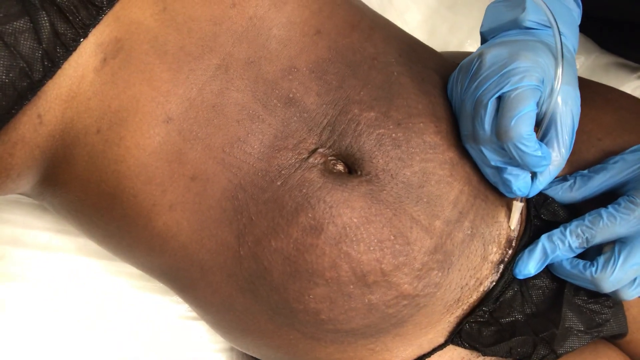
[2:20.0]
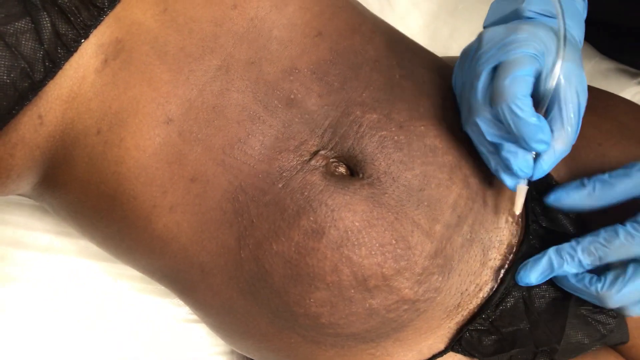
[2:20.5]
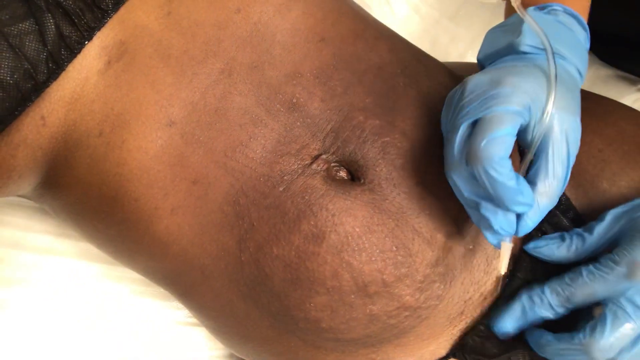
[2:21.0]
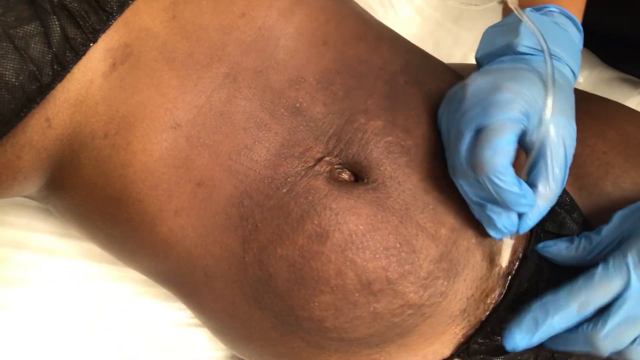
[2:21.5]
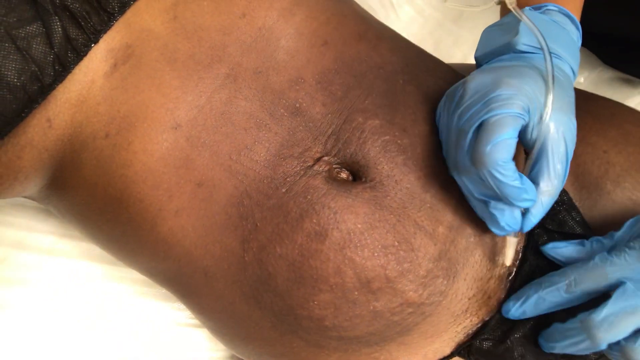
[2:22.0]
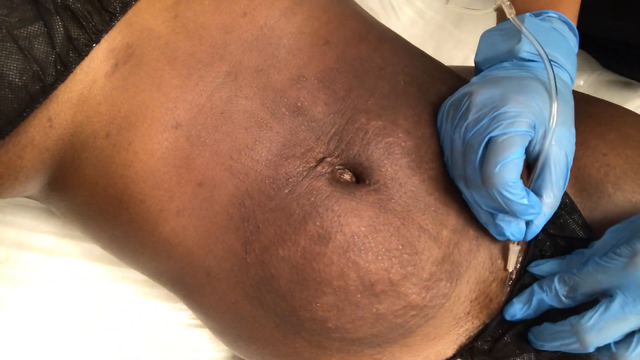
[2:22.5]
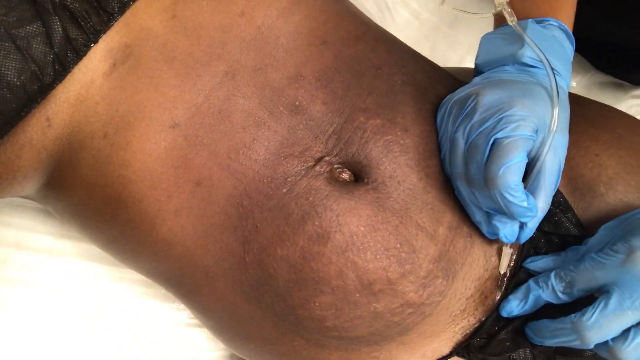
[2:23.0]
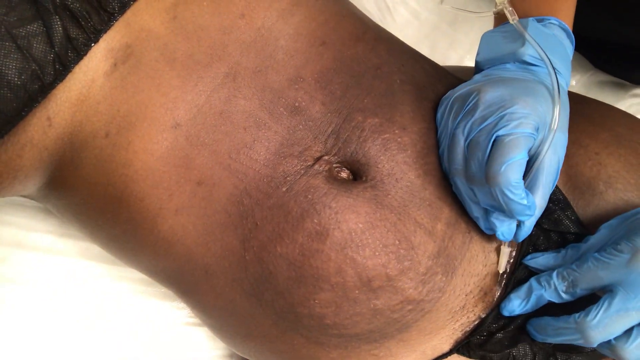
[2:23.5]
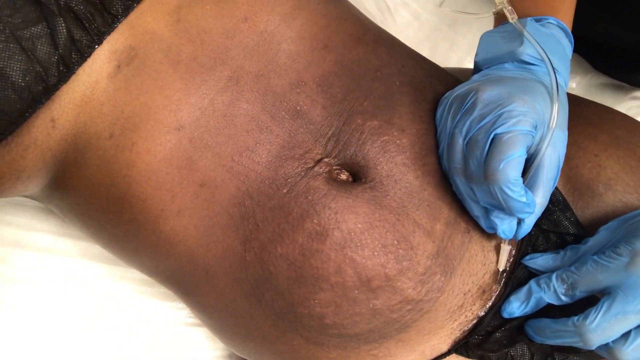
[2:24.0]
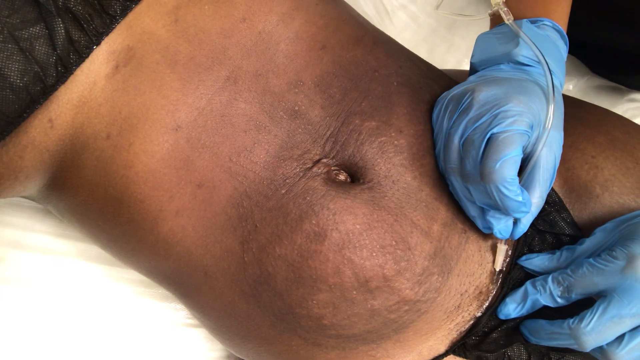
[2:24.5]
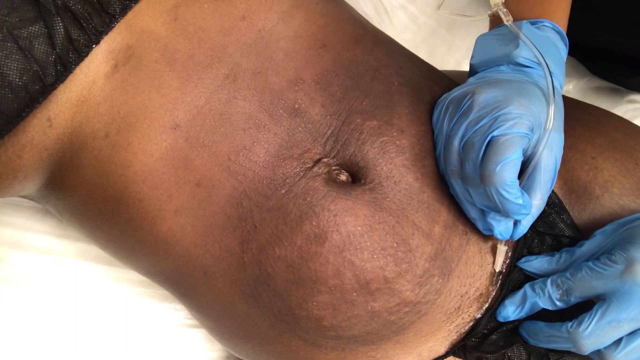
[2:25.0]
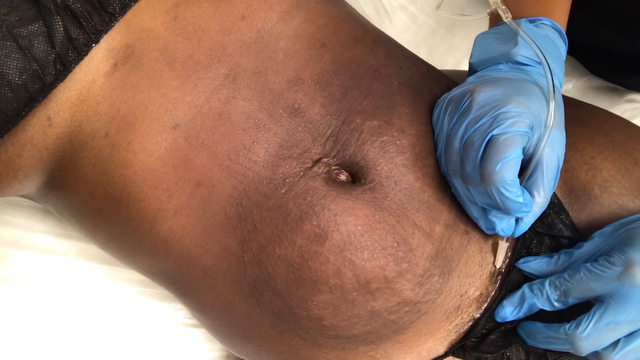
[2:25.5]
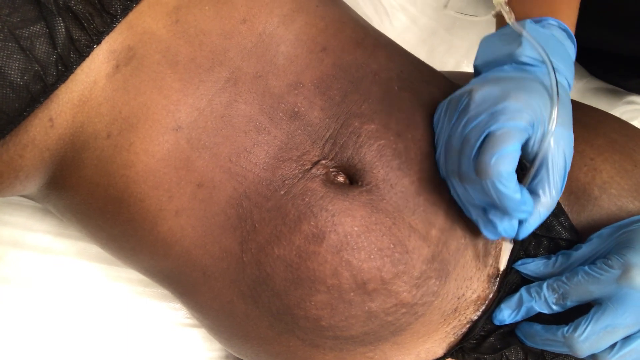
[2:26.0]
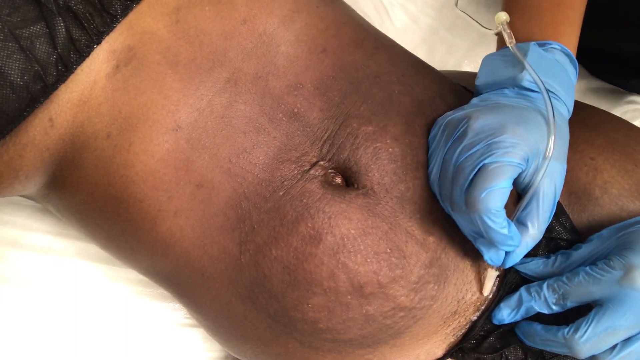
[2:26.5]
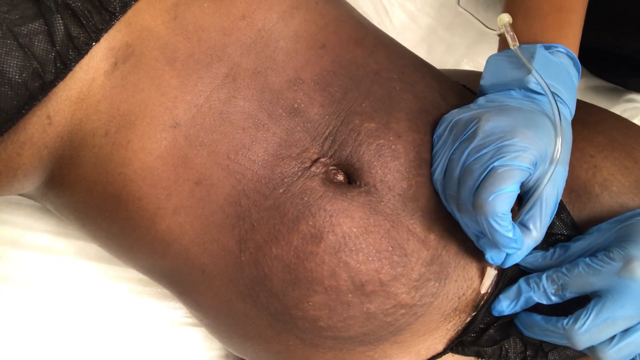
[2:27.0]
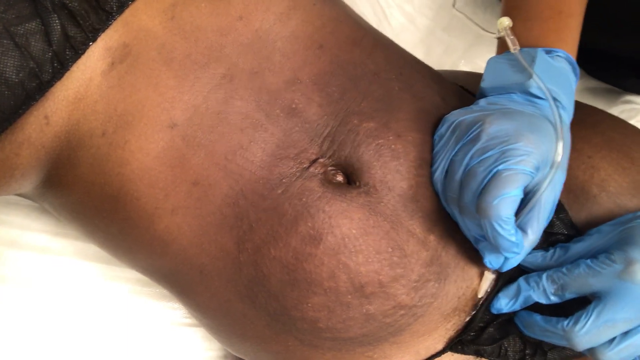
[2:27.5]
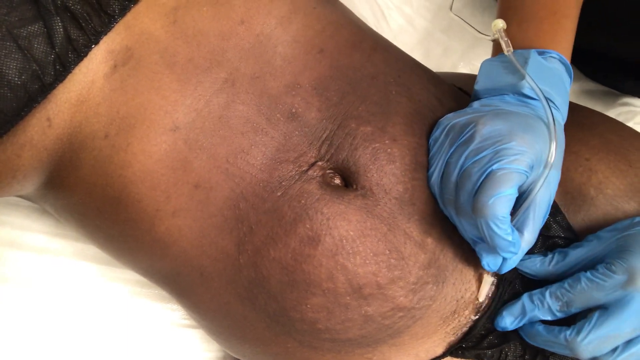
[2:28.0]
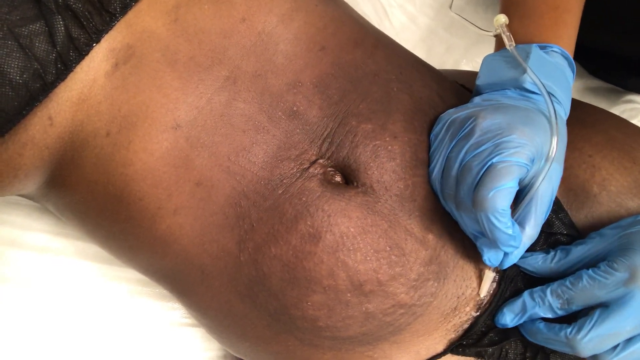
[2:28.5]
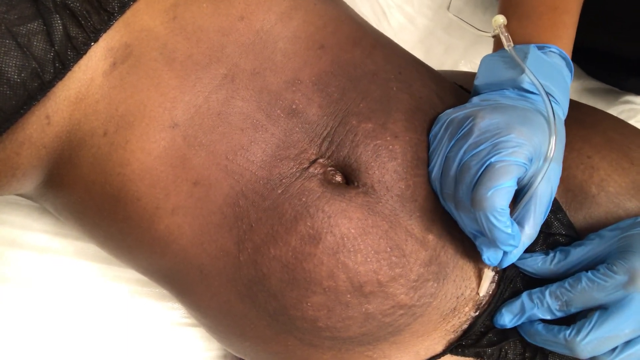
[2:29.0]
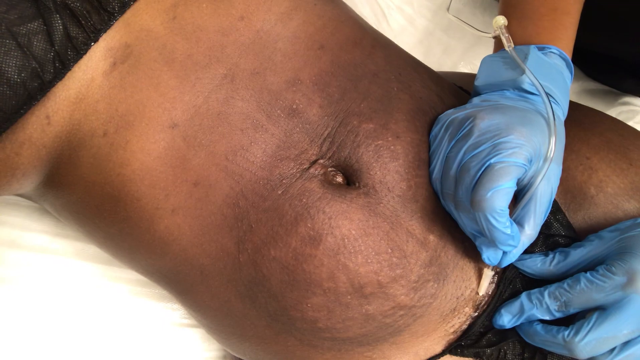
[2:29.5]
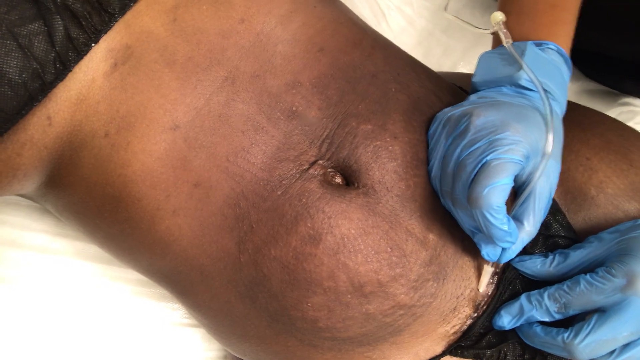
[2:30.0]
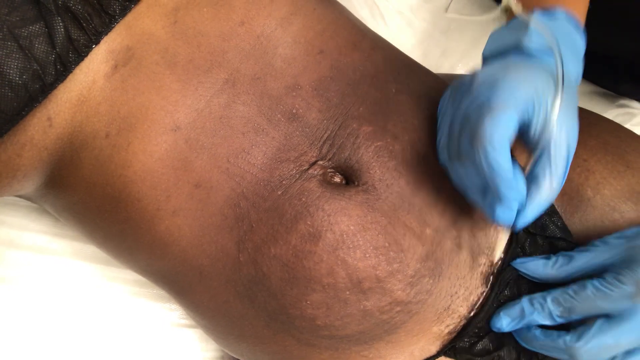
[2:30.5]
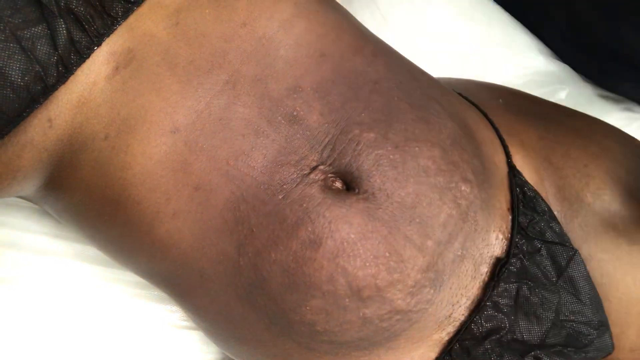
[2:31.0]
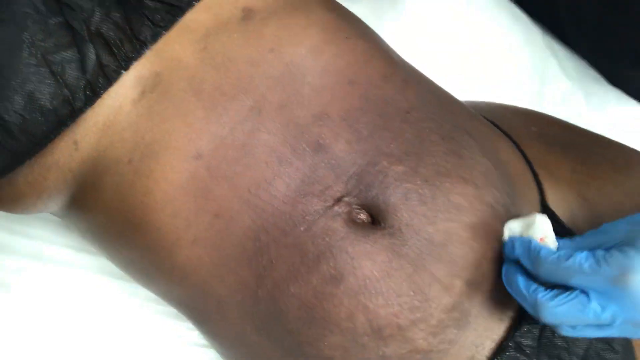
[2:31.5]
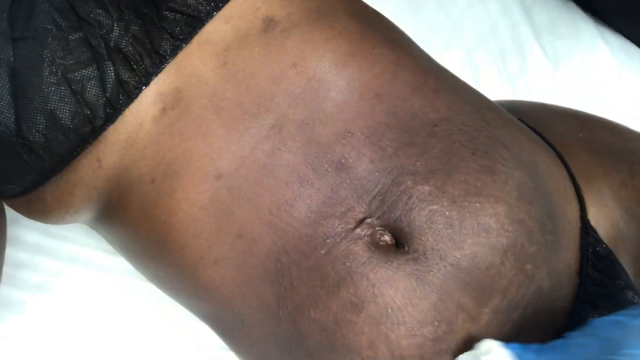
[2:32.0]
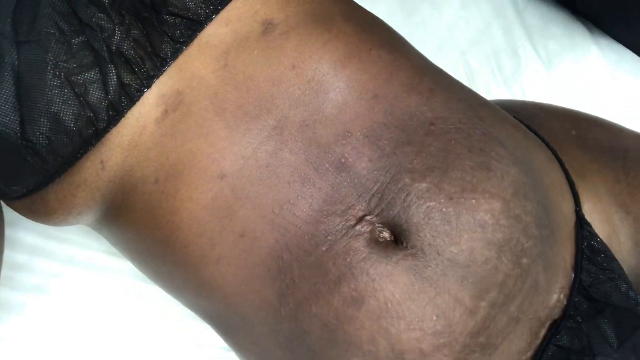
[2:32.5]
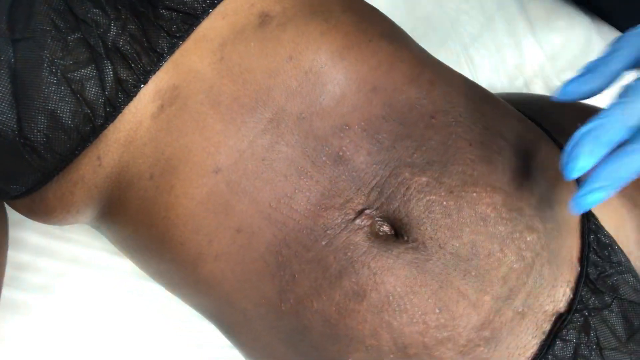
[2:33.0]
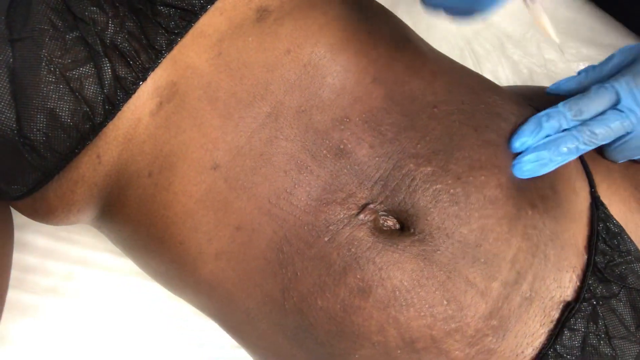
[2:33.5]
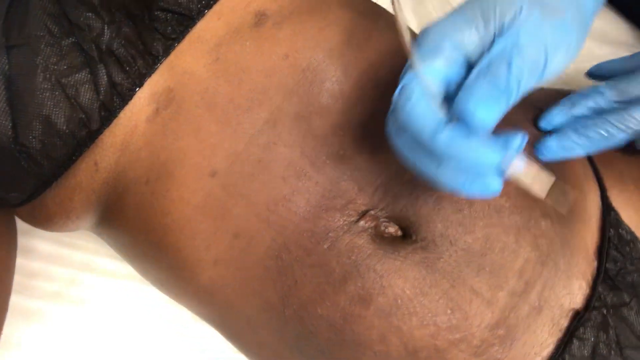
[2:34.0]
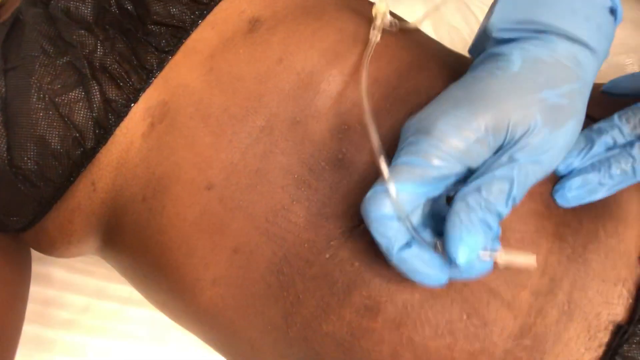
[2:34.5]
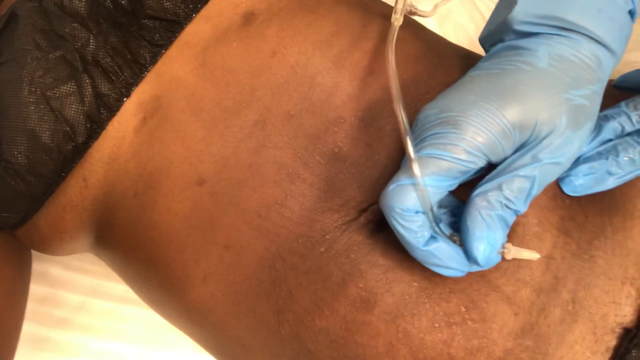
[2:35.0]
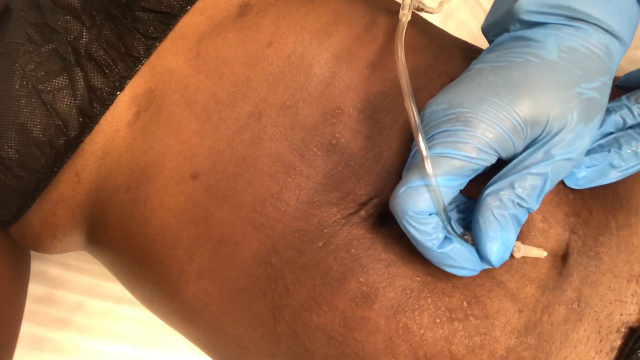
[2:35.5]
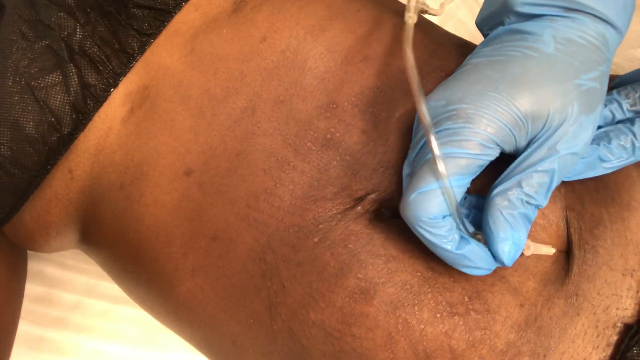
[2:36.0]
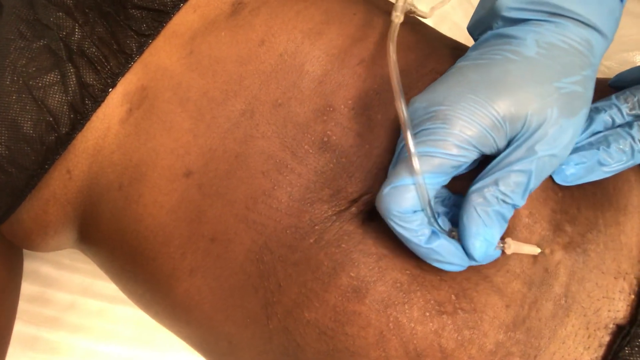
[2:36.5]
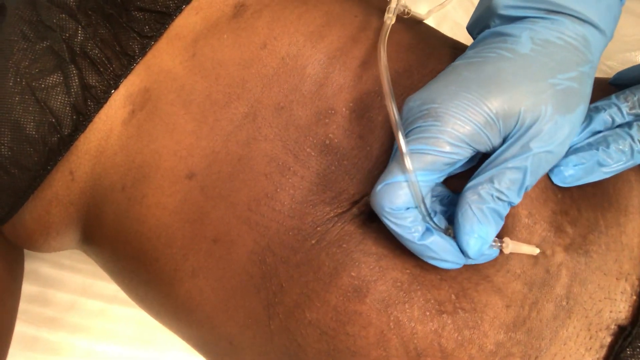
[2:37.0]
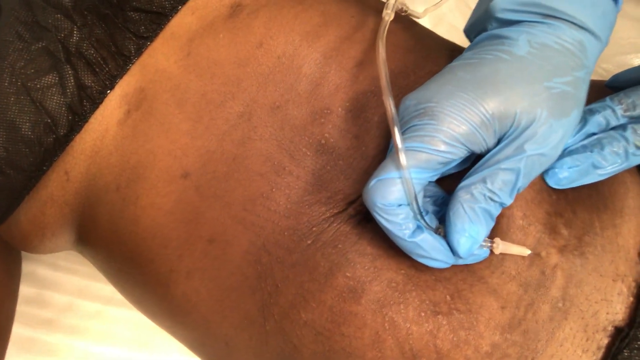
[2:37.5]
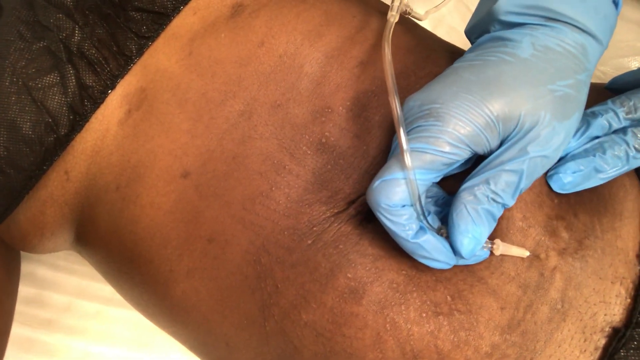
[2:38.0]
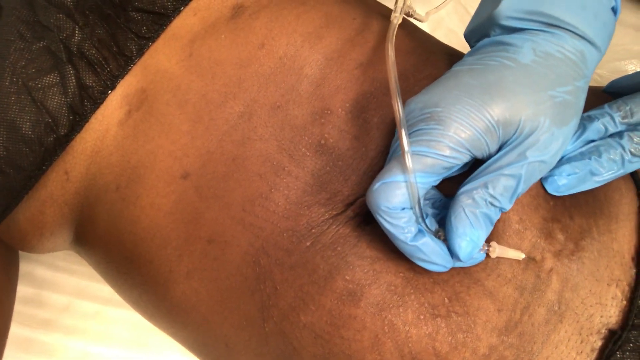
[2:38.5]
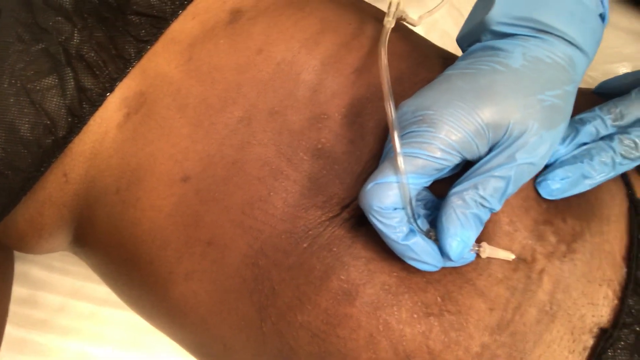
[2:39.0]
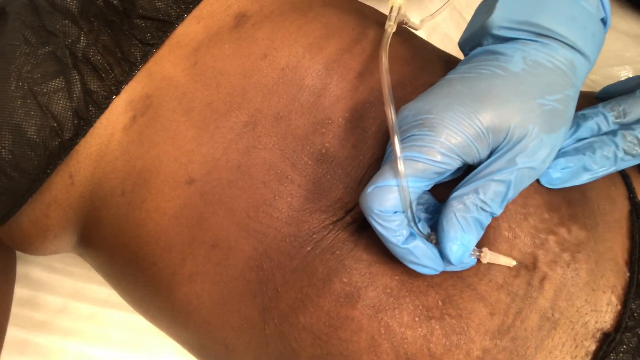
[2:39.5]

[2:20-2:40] The individual in latex gloves rests one hand on the woman's groin to stretch the skin while injecting the bottom of the stomach just underneath the top rim of the garments. The doctor does the same a little further along, more central to the stomach, proceeding from the upper part of the scene to the bottom and injecting two or three times, before moving back up toward the belly area, away from the groin, to a spot below the belly button near where they injected at the very beginning of the video. It seems the doctor has injected down a line across the entire bottom of the stomach before returning to the main area. The stomach seems less wrinkled overall than when the video started.